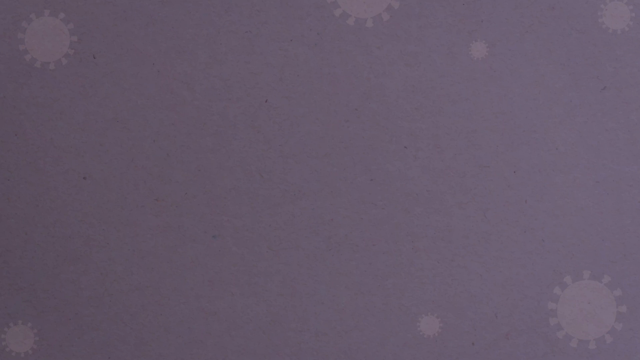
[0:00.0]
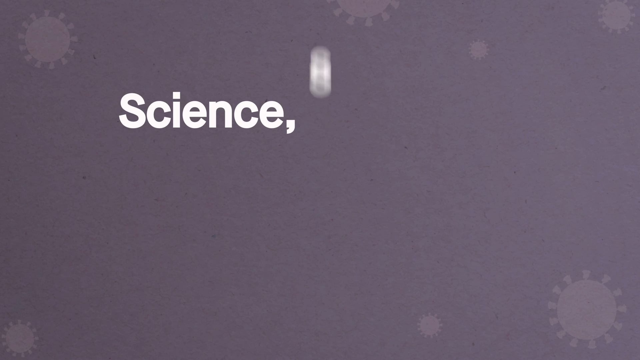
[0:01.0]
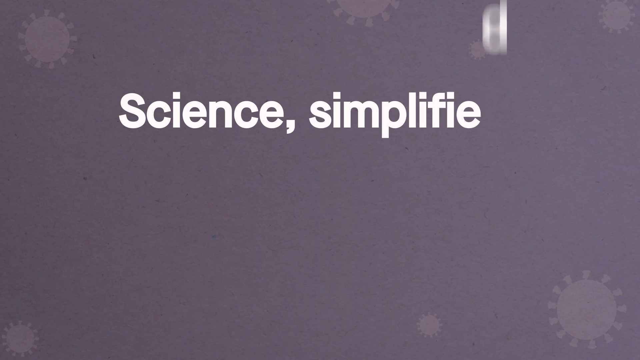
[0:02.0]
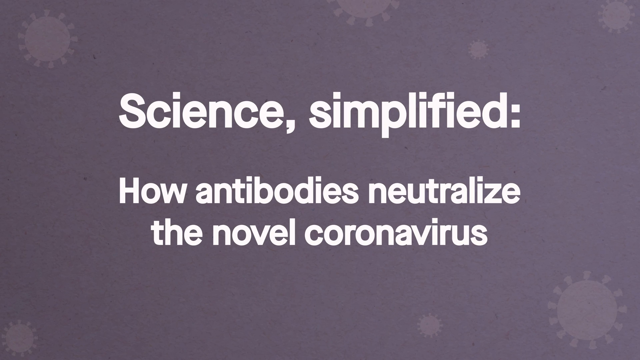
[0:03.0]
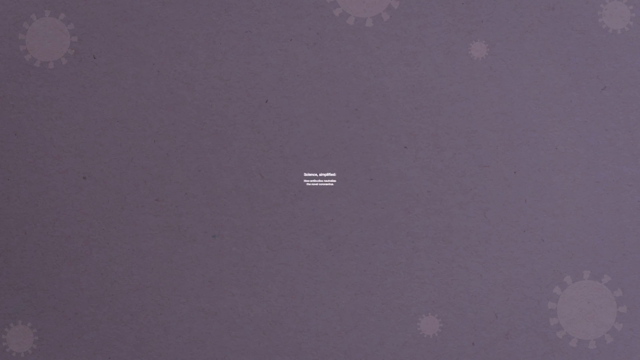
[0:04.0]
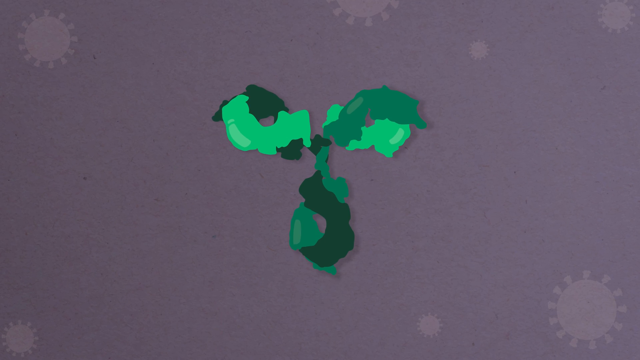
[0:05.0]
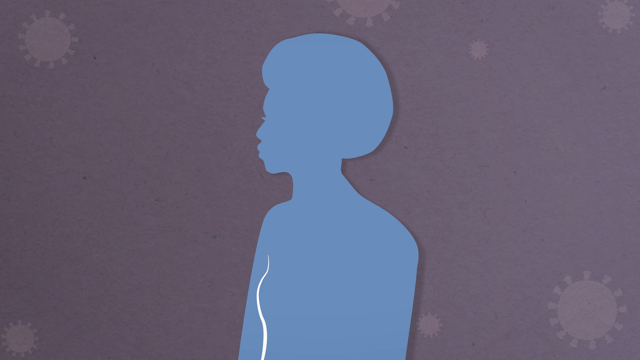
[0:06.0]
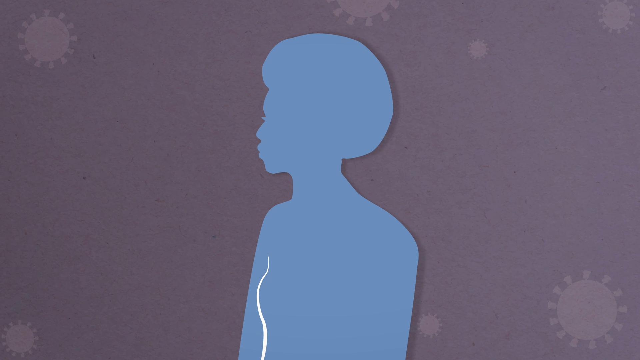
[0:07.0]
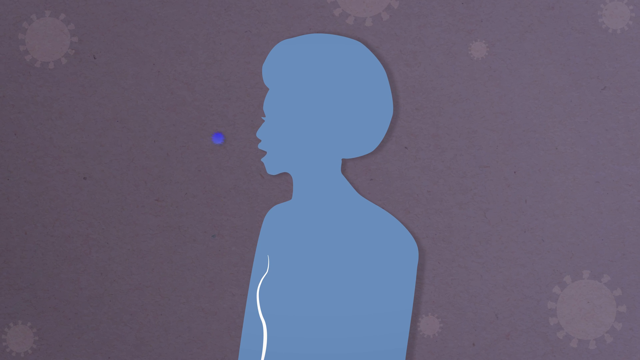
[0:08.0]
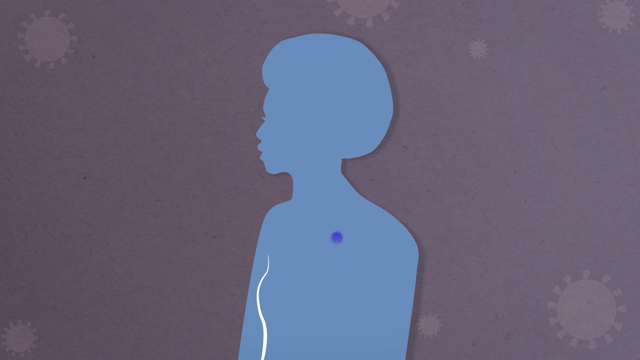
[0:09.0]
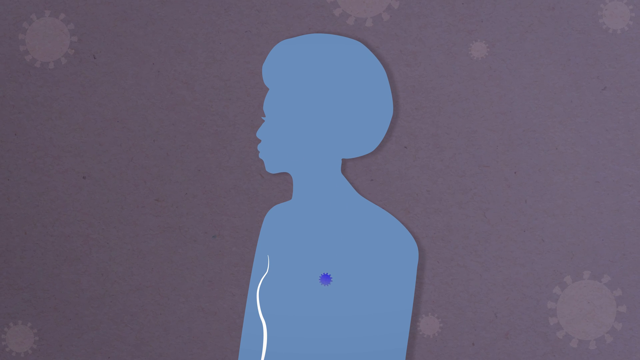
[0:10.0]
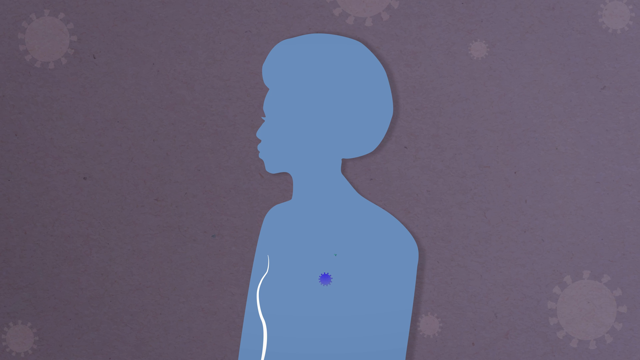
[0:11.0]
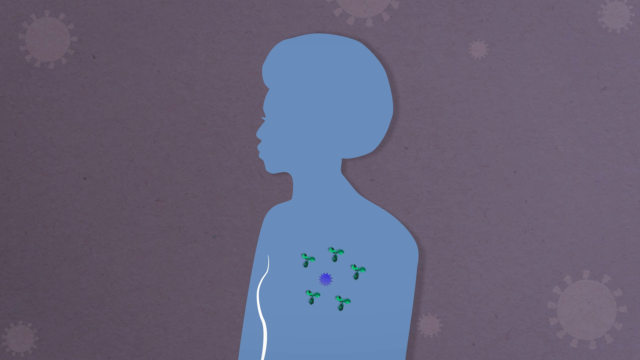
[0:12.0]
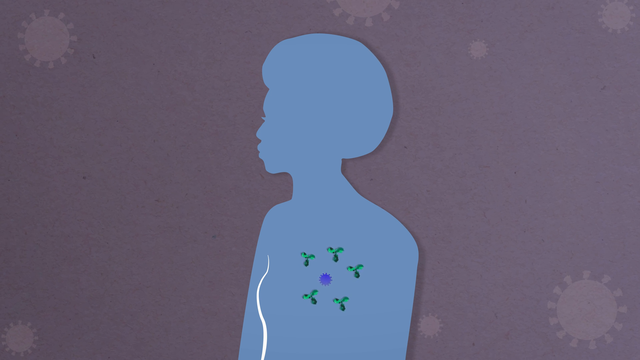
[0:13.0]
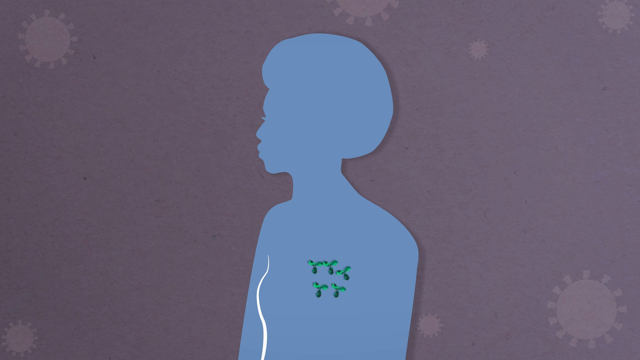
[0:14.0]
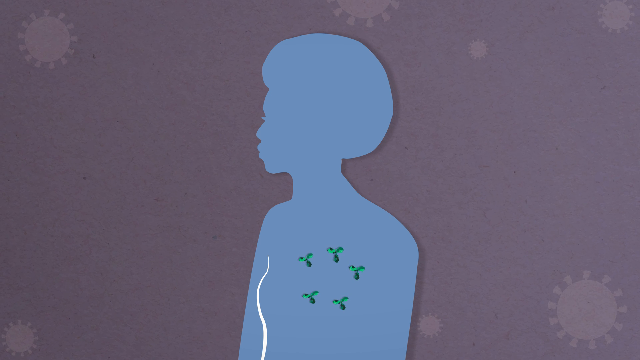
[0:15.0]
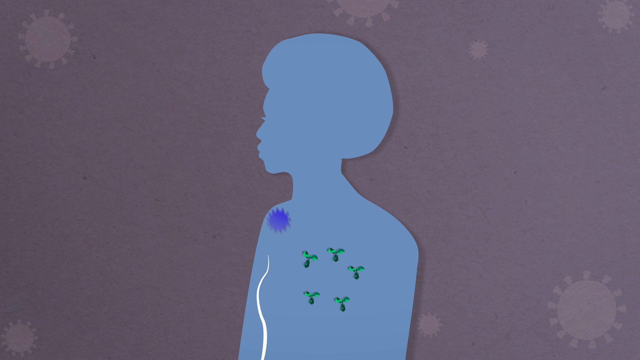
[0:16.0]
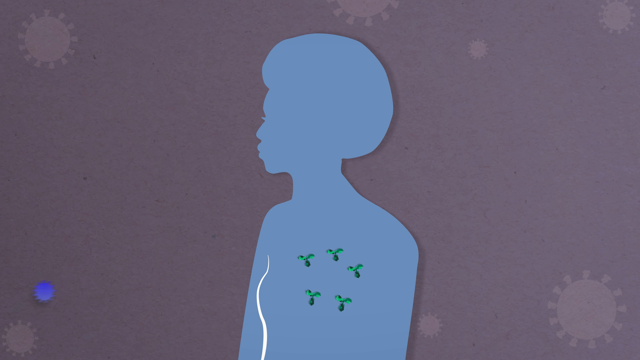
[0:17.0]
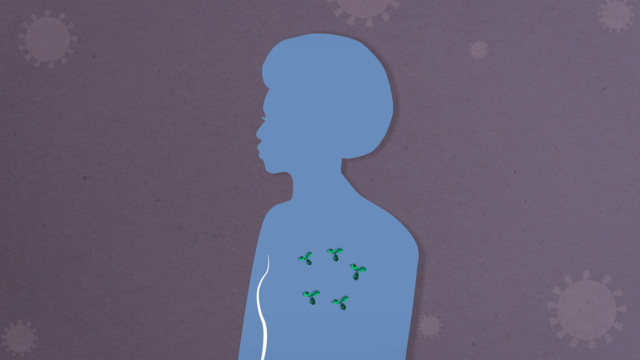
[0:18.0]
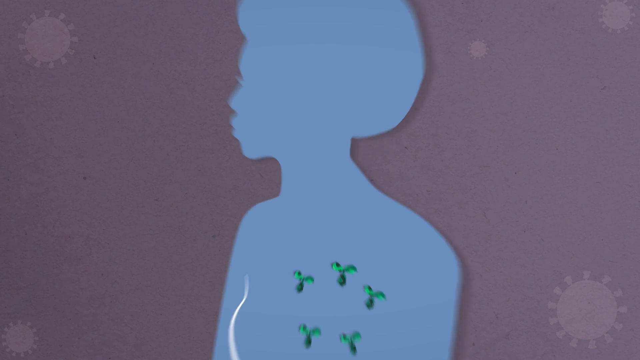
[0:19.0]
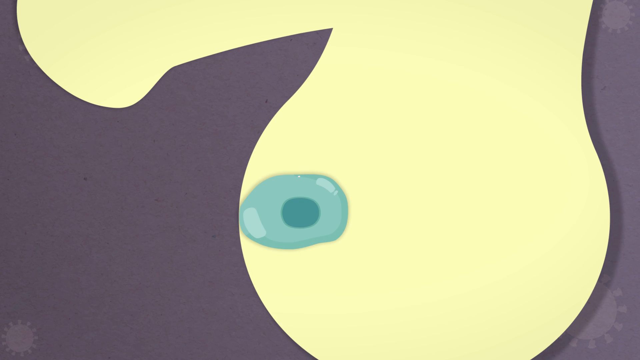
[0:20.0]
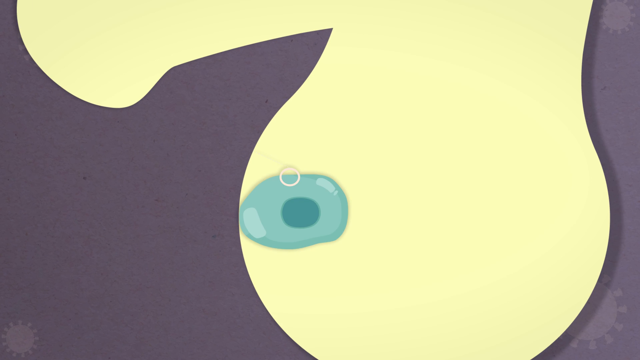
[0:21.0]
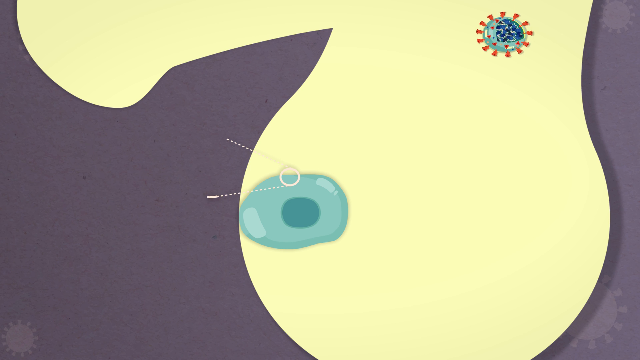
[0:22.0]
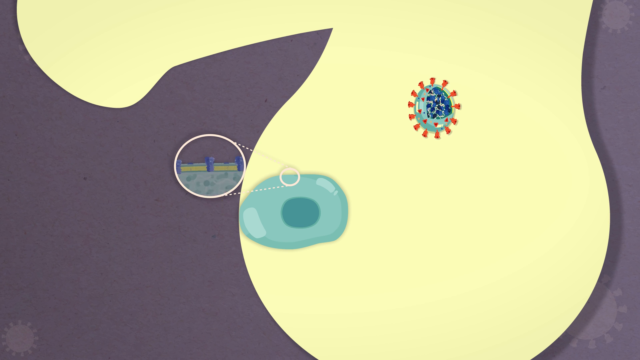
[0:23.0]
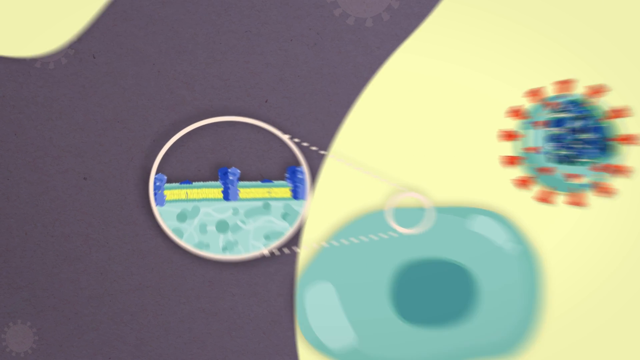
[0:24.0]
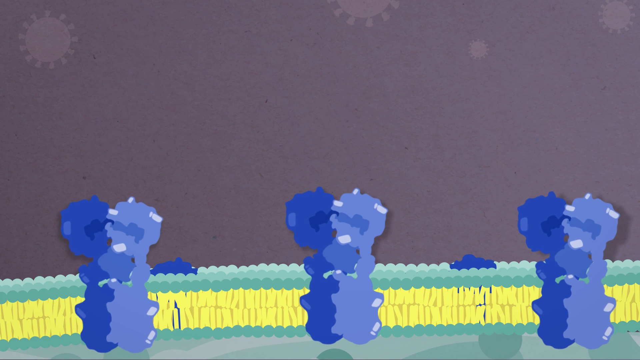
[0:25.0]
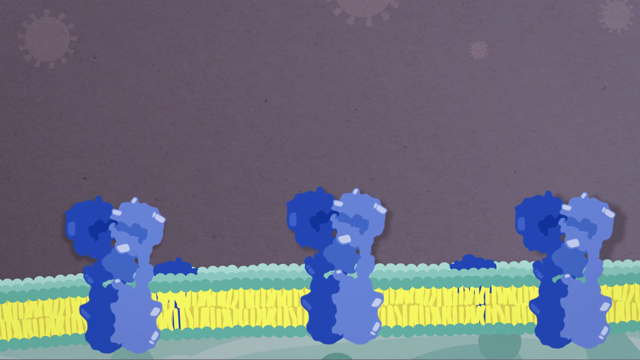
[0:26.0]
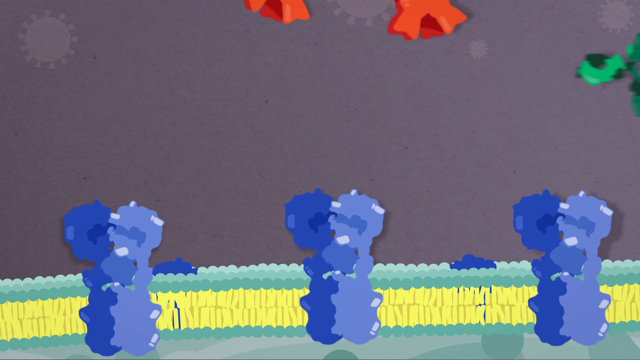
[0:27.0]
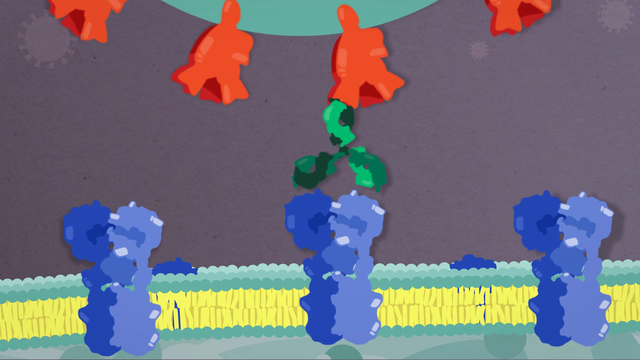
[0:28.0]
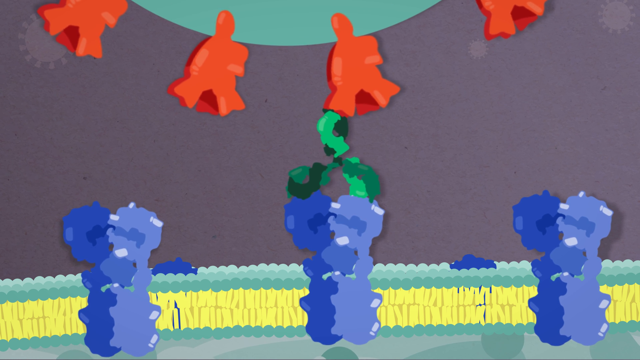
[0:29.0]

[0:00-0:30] The video is about antibodies. The first screen has a charcoal gray background with white letters reading "Science Simplified," and further down, "how antibodies neutralized the novel coronavirus." The next screen shows a blue silhouette of a woman who seems to have an afro, turned toward the left-hand side of the video. Something blue, which looks like an organism, goes into her mouth and travels to the heart area. Little green things surround the blue organism and take a piece of it, and the organism then travels down to the feet area. A new slide shows blue organisms in light blue and darker blue, with green and yellow visible in the background. A green and orange cell comes and connects to the blue organisms.